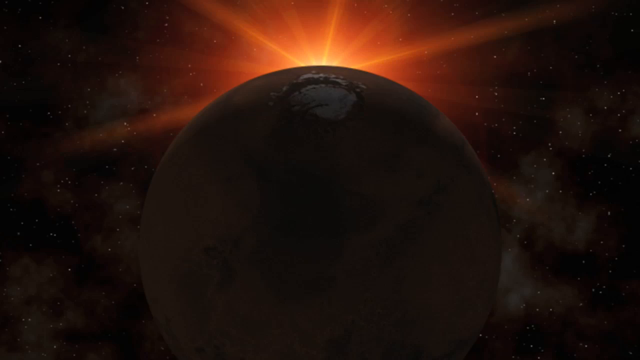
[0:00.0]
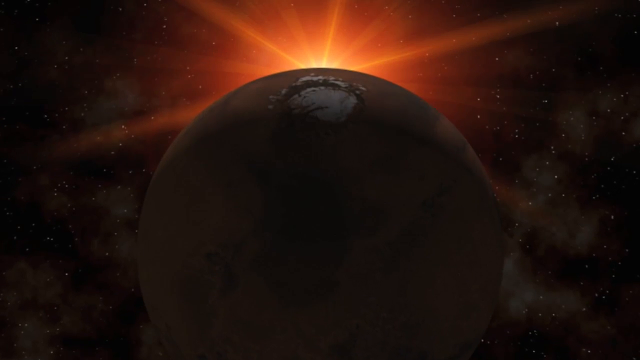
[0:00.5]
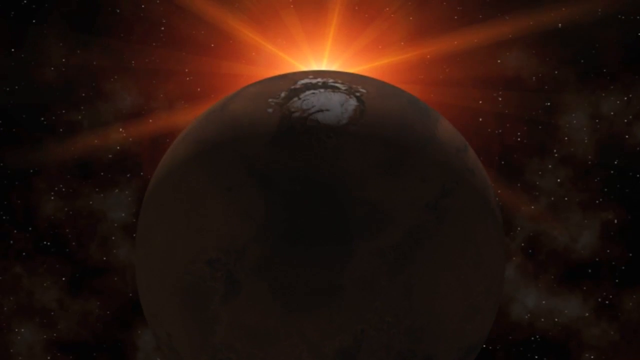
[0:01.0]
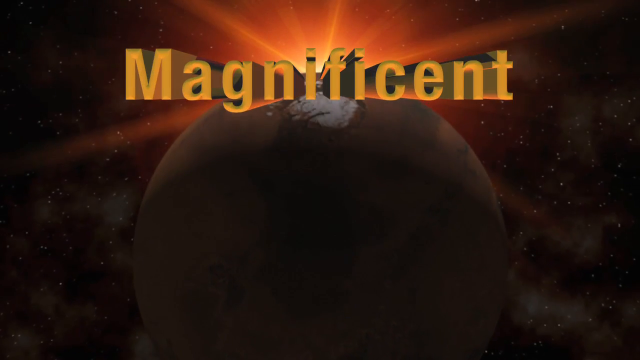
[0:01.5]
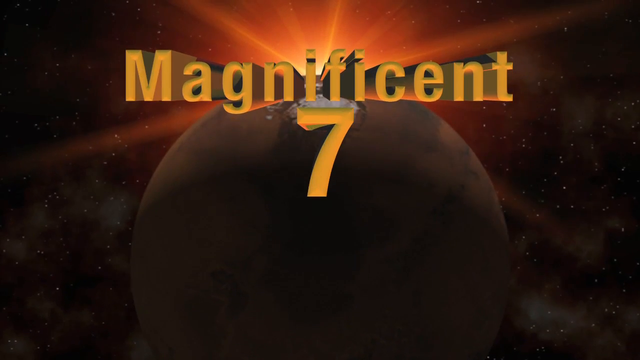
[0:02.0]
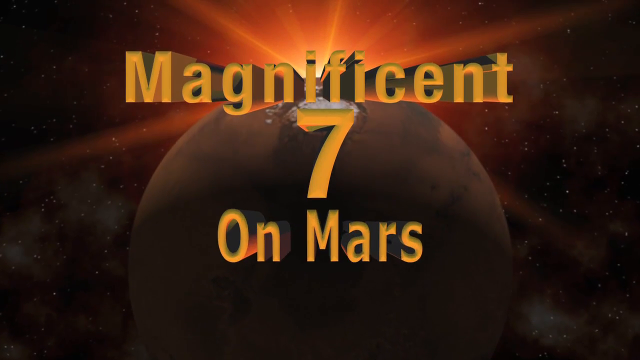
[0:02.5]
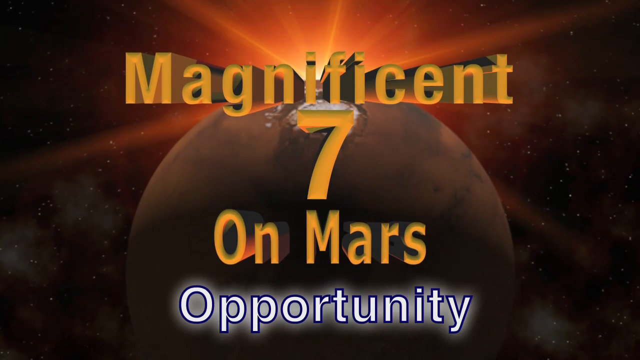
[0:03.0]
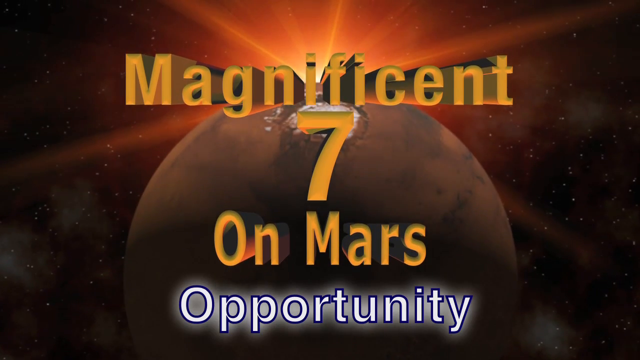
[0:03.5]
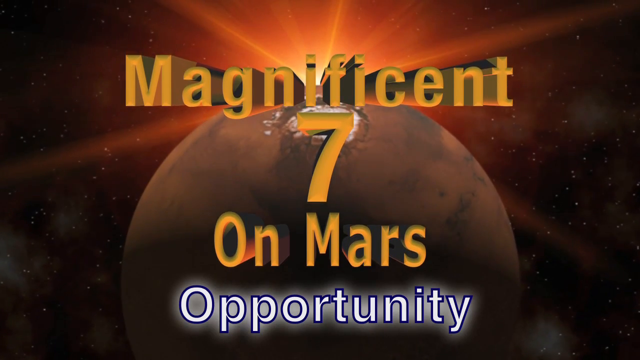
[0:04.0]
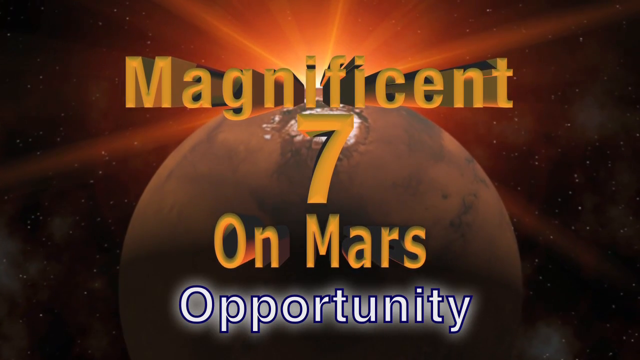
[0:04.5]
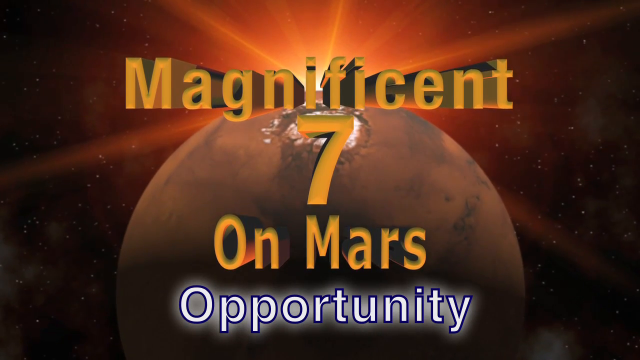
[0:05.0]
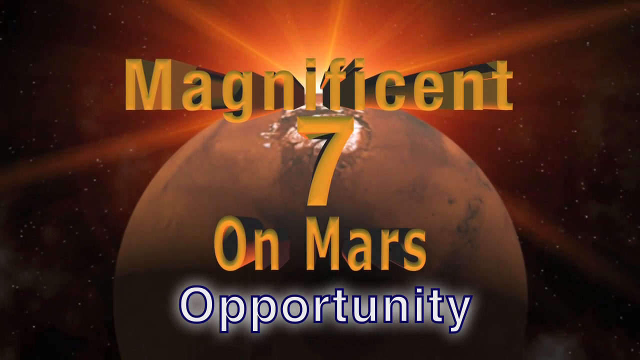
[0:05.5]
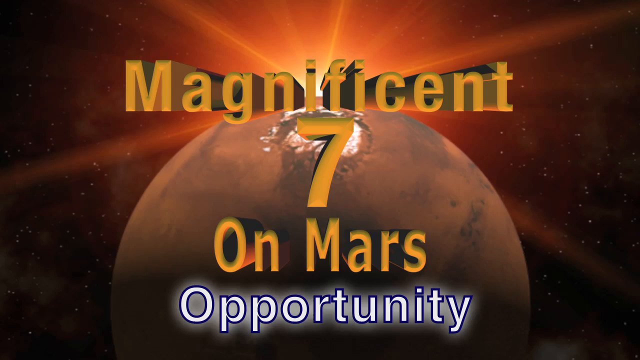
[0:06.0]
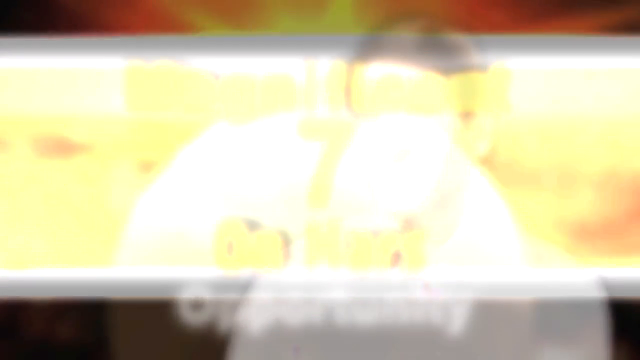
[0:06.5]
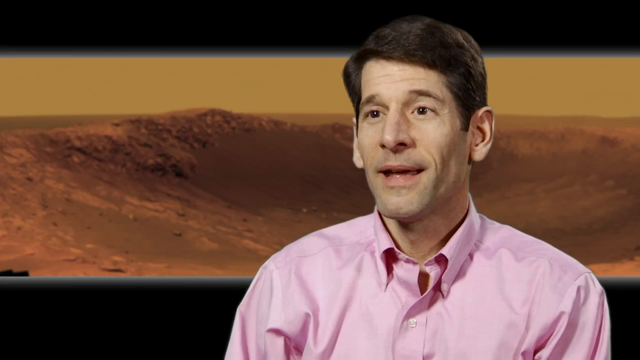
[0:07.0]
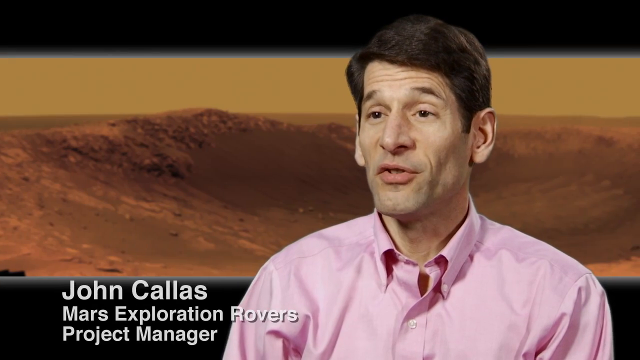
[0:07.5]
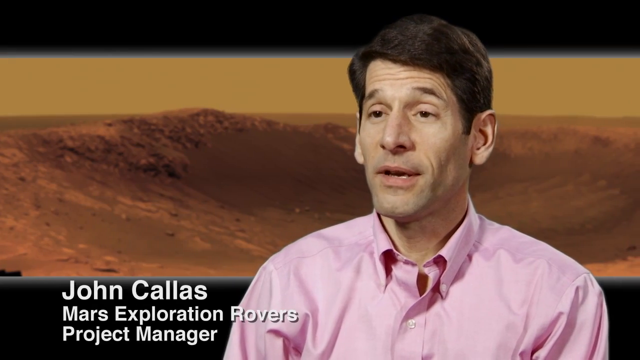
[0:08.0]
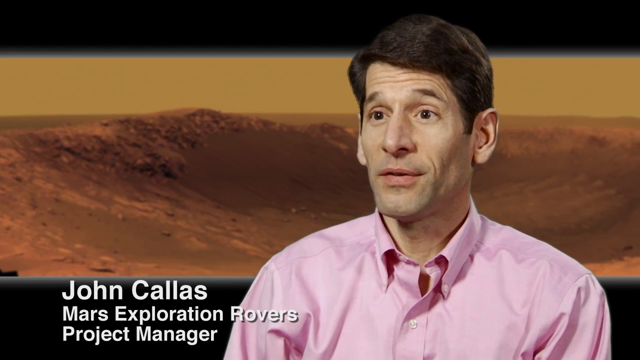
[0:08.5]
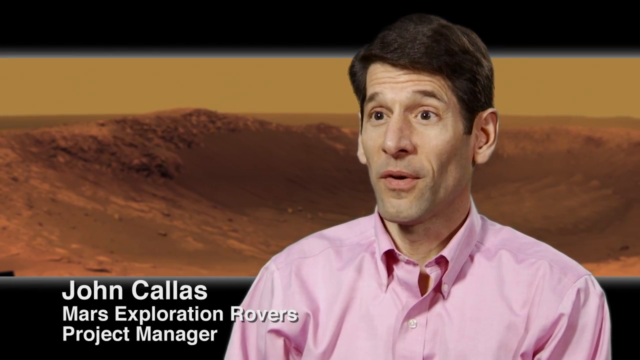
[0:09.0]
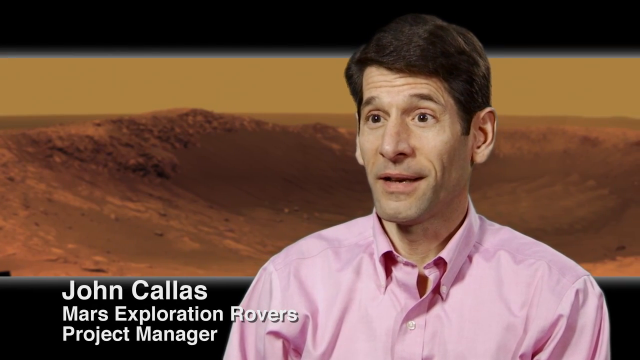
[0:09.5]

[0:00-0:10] A round, dark, planet-like sphere appears, with what looks to be possibly the Sun in the background. Text pops up on top of the sphere reading "Magnificent 7 on Mars"; the letters start far away and zoom in closer to the viewer. Below it, text reads "Opportunity", so together it says "Magnificent 7 on Mars Opportunity". The globe slowly moves closer to the camera, then a flash takes the video to a different screen showing a man being interviewed, seen from the shoulders up. He has dark hair and speaks, and the name "John Callas" pops up on the left-hand portion of the screen.